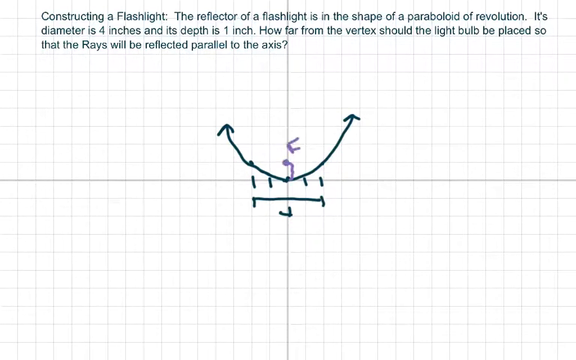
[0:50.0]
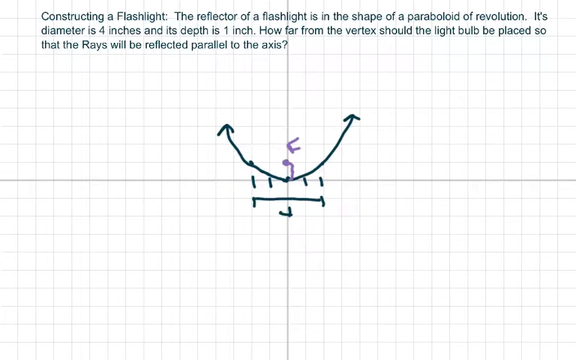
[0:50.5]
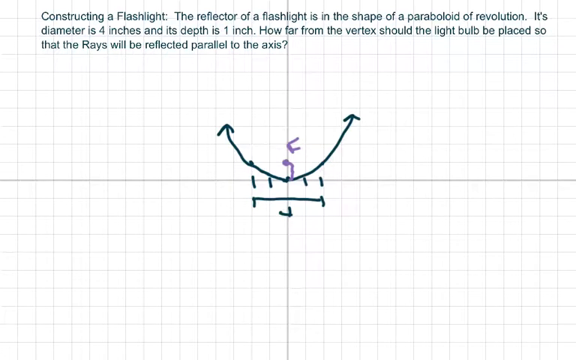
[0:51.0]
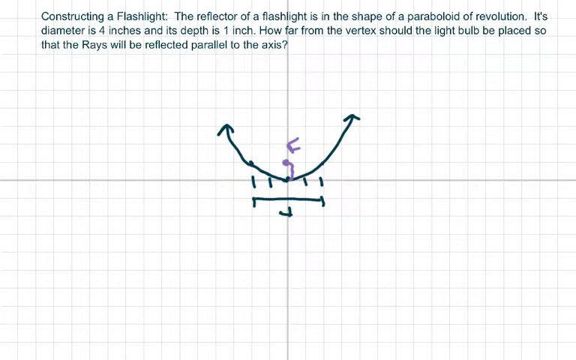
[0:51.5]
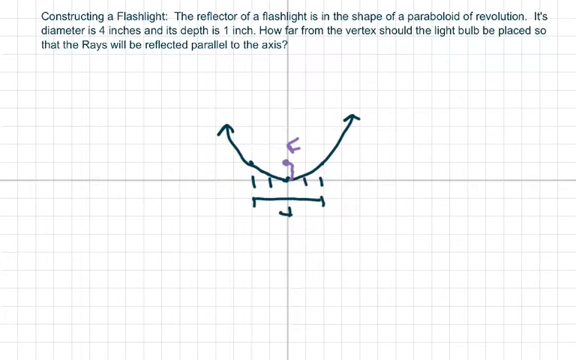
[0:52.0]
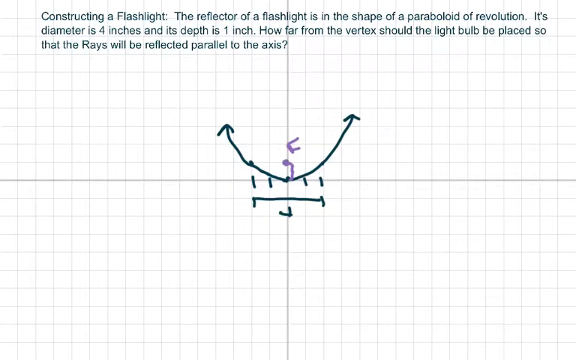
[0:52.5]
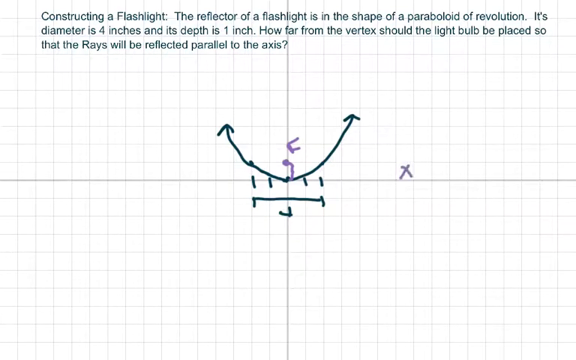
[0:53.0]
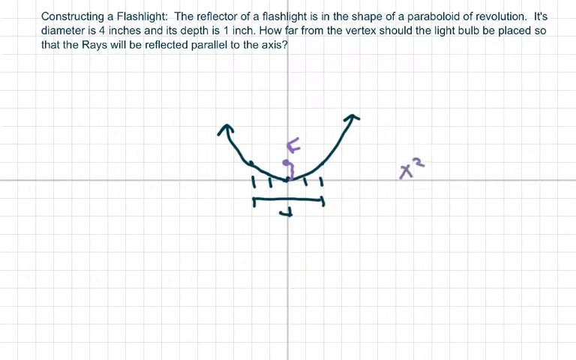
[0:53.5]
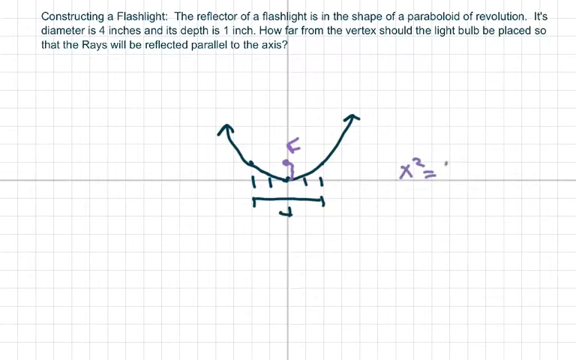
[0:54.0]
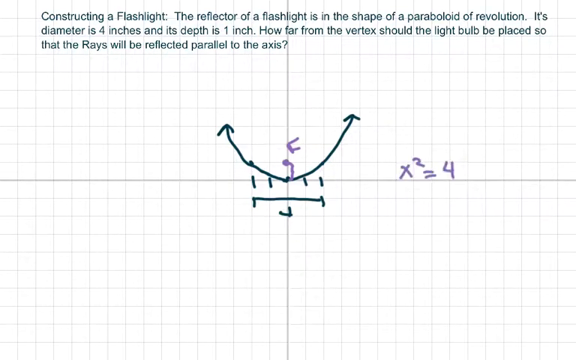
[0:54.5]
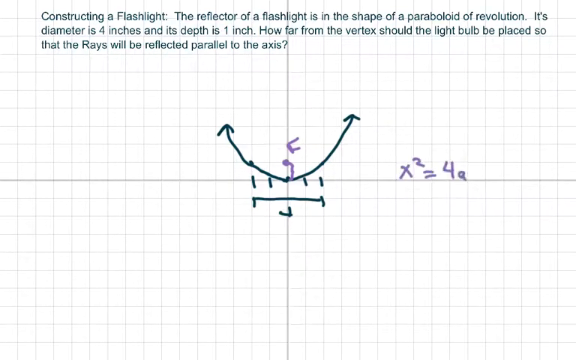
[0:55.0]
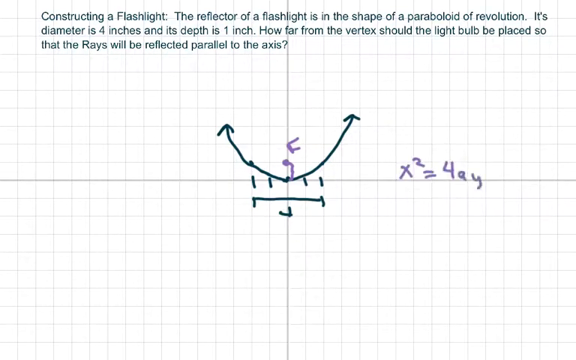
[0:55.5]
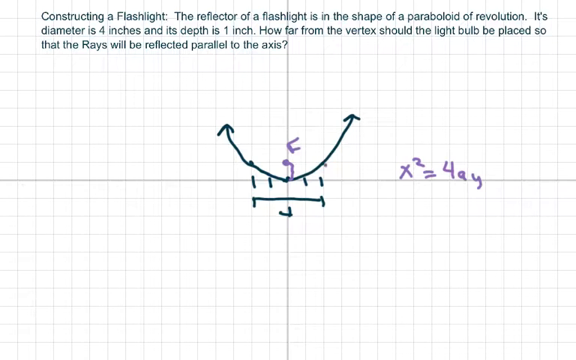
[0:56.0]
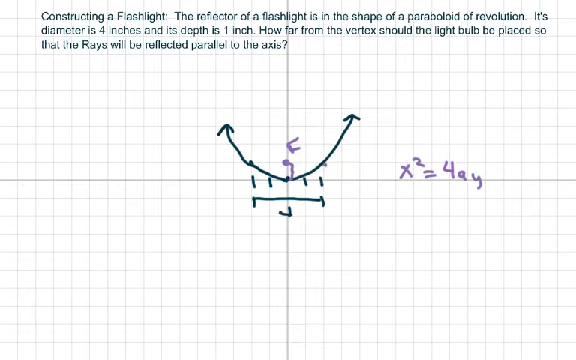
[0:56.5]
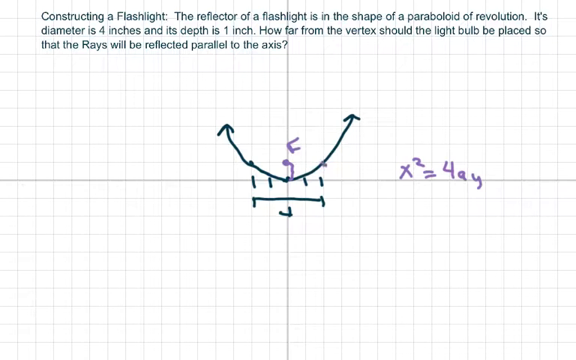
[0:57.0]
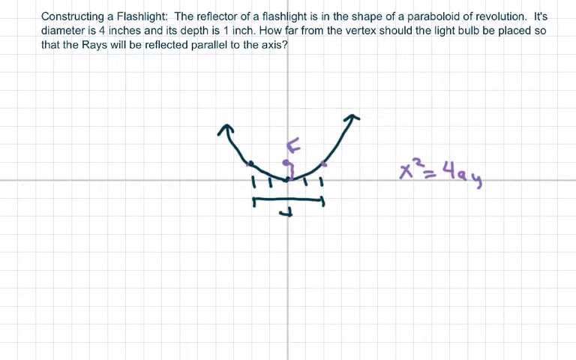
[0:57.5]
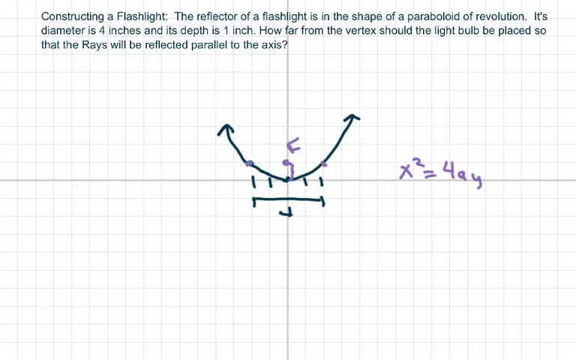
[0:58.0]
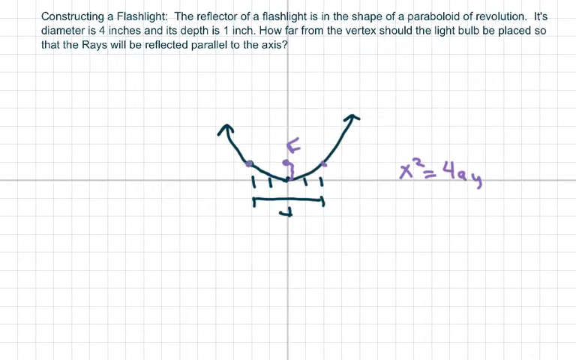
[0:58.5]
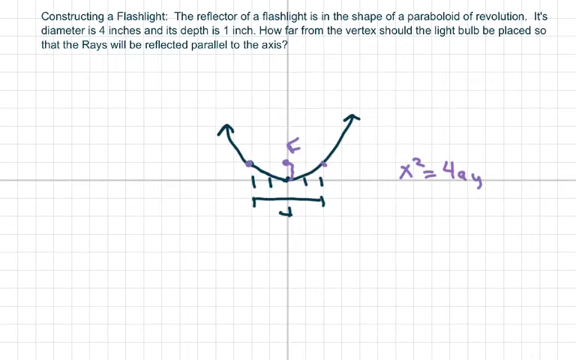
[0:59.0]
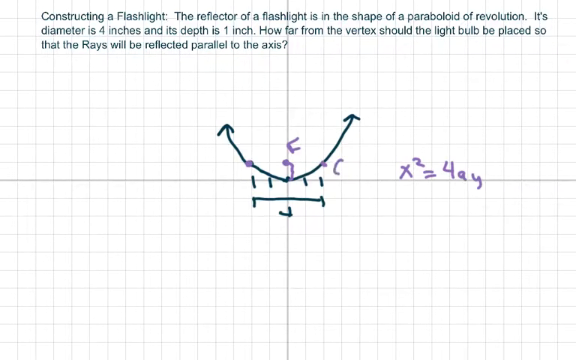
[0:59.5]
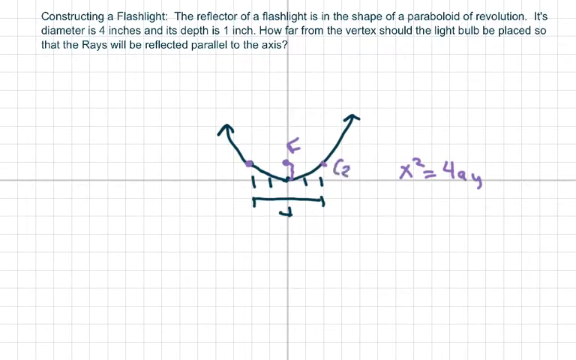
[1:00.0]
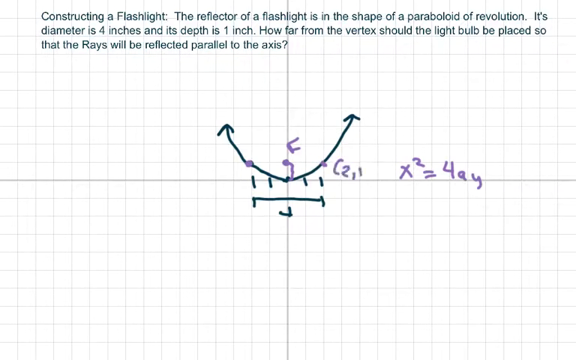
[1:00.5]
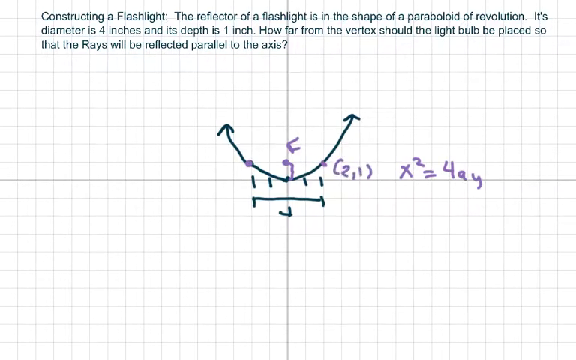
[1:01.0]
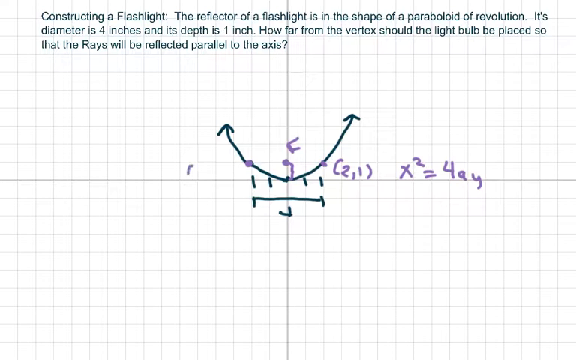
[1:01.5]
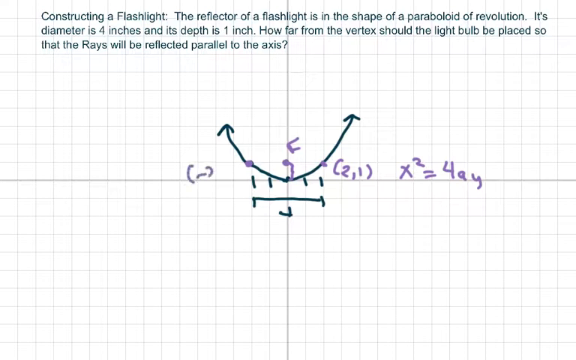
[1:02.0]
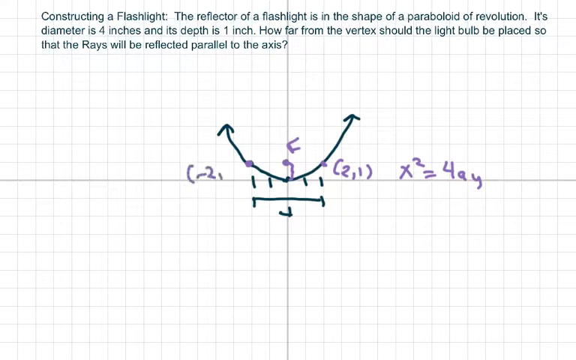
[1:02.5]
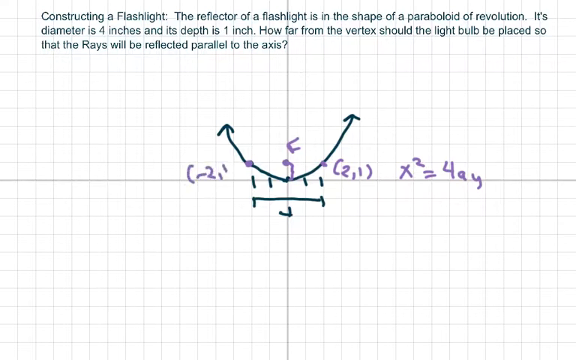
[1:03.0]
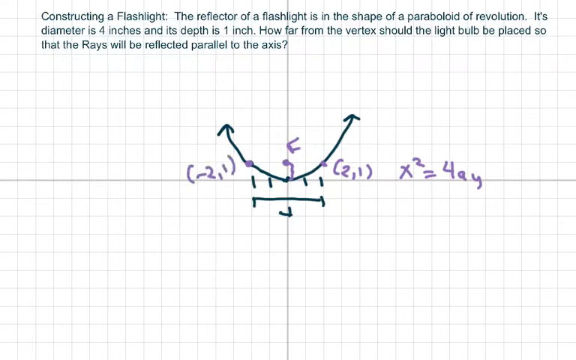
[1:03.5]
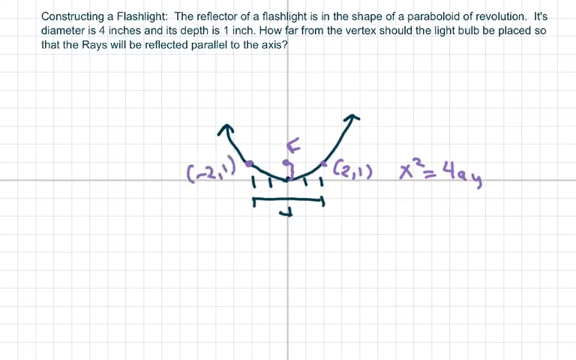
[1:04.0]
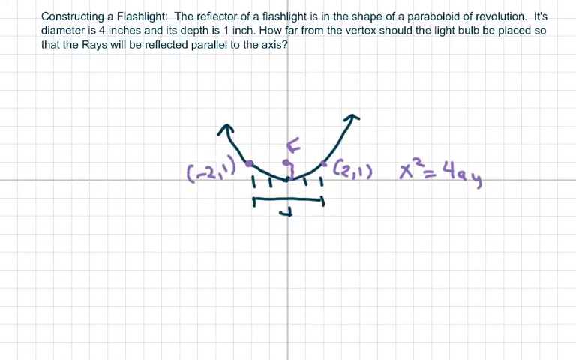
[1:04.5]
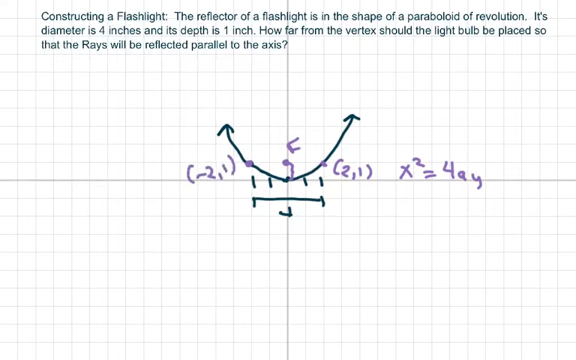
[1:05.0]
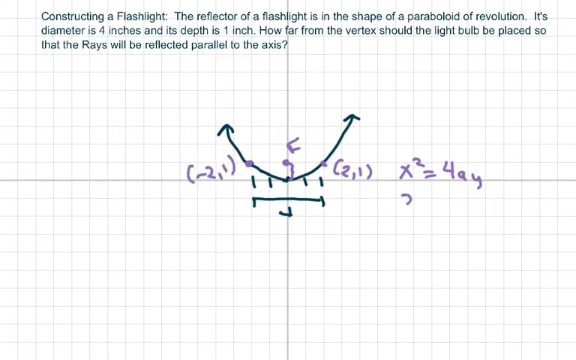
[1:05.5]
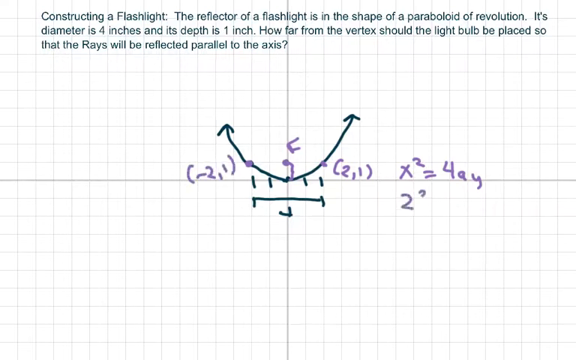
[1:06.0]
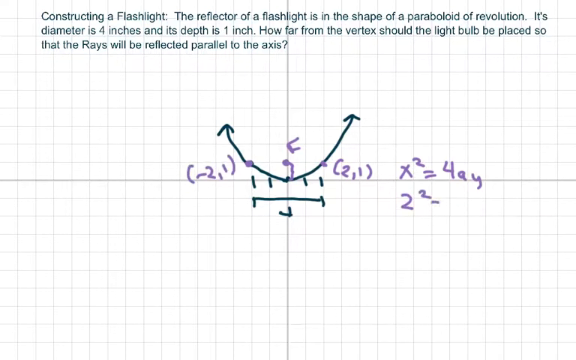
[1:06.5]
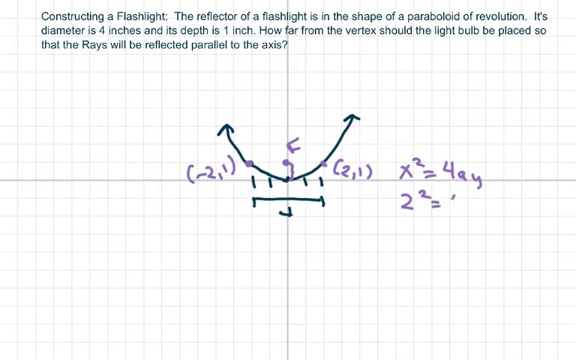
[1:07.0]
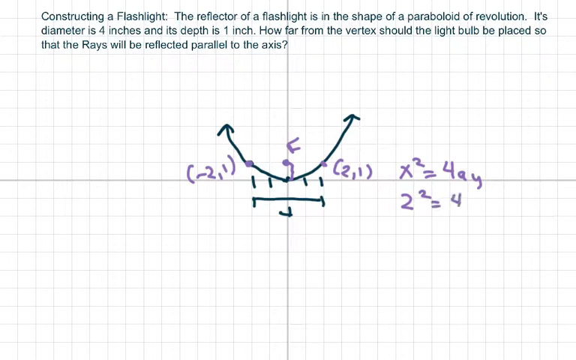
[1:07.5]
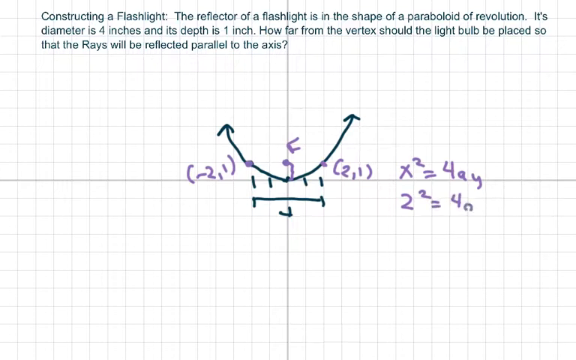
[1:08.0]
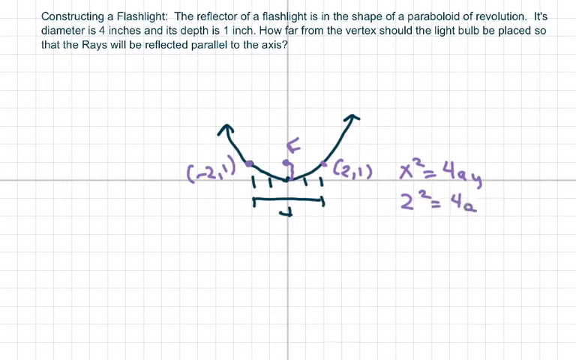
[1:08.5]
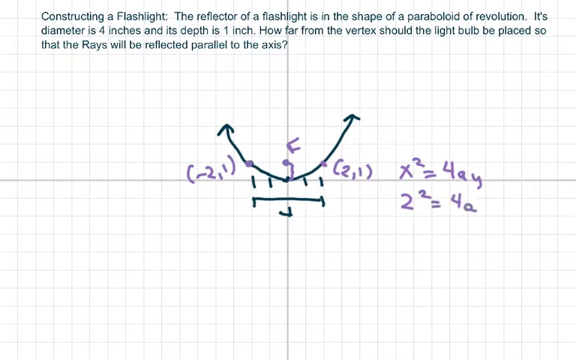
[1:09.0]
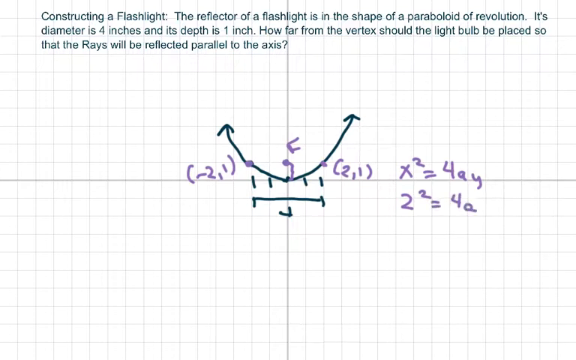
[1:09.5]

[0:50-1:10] The letters c and g are written. On the right-hand side, on top of the right line, "x to the exponent two equals 4ay" is written in purple font. On the smiley-shaped line, on the part that goes from the middle up to the top right, "(2, 1)" is written, and on the part that goes from the middle dot to the left, "(-2, 1)" is written. Down in the lower left box, something reading one and two equals four is written, apparently meaning two by two equals four.